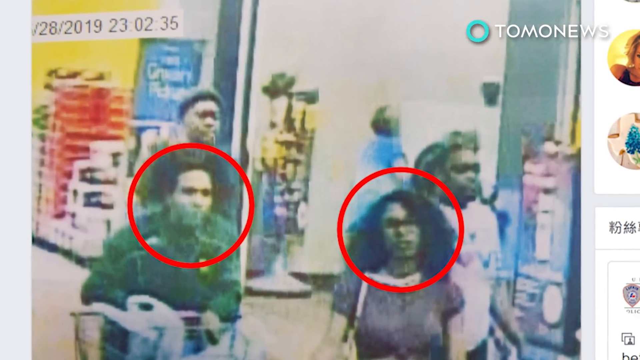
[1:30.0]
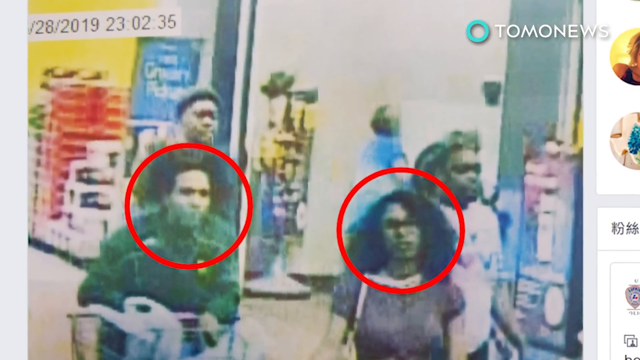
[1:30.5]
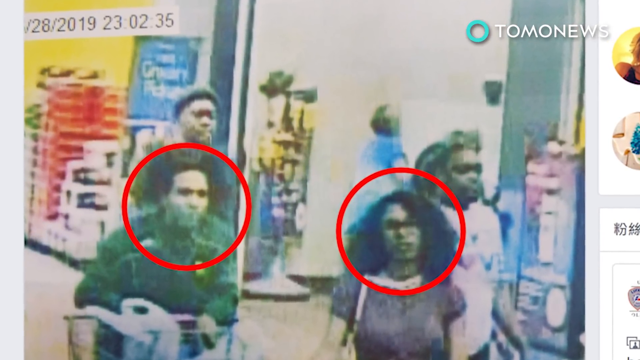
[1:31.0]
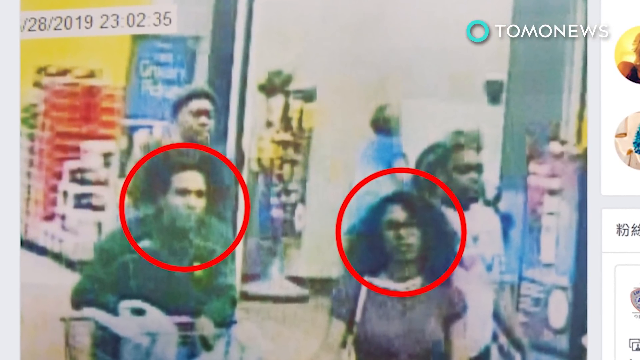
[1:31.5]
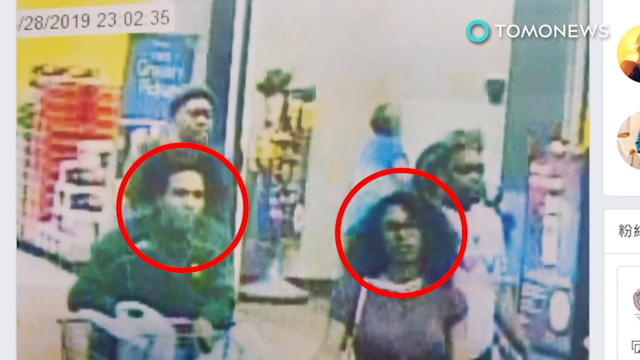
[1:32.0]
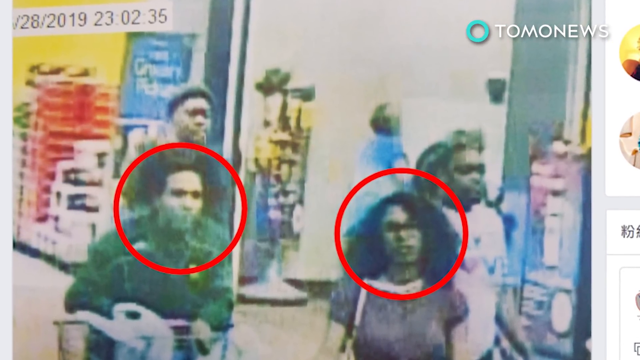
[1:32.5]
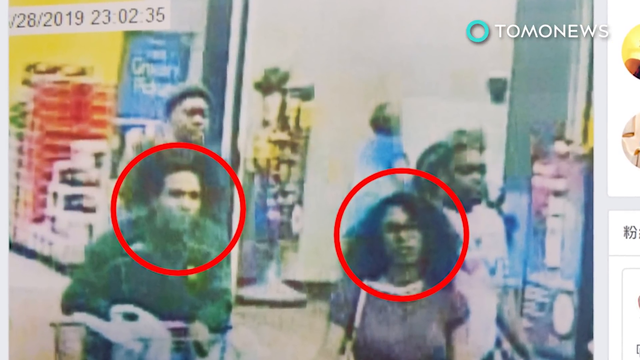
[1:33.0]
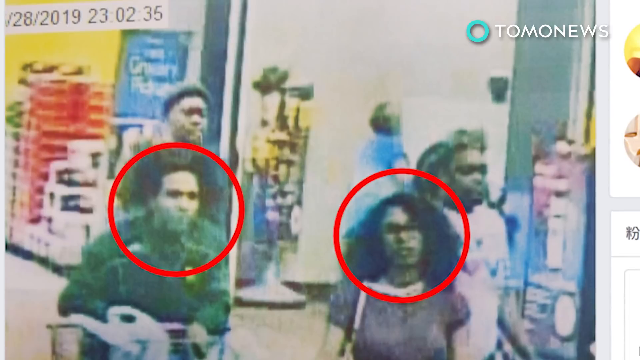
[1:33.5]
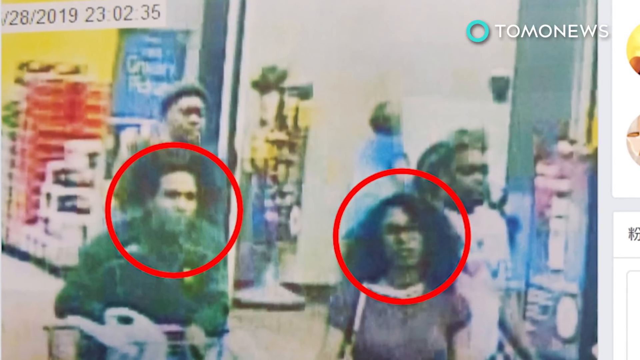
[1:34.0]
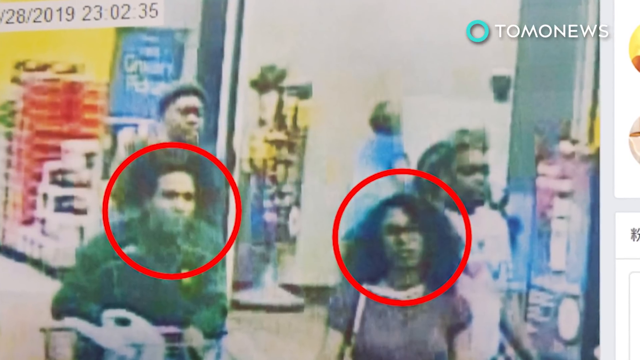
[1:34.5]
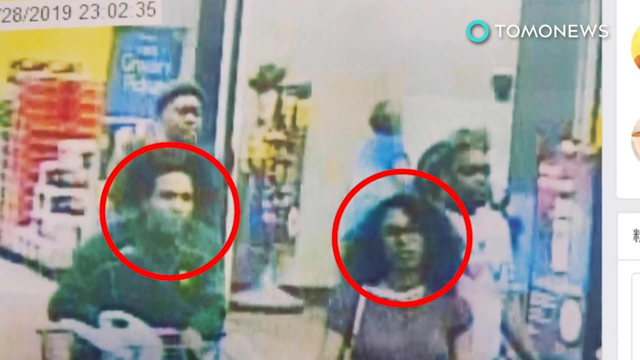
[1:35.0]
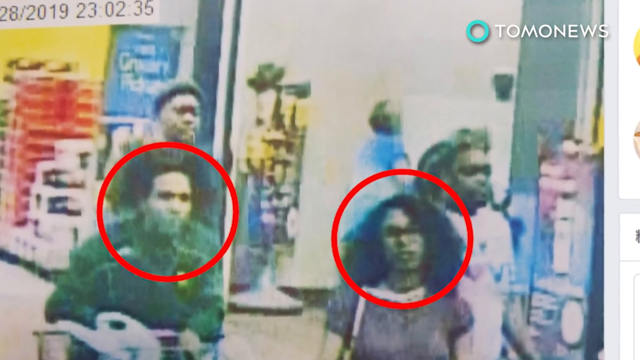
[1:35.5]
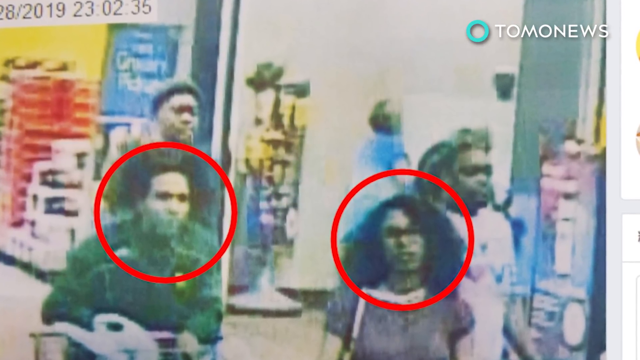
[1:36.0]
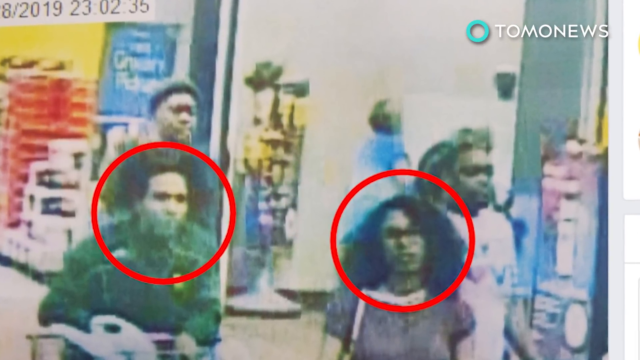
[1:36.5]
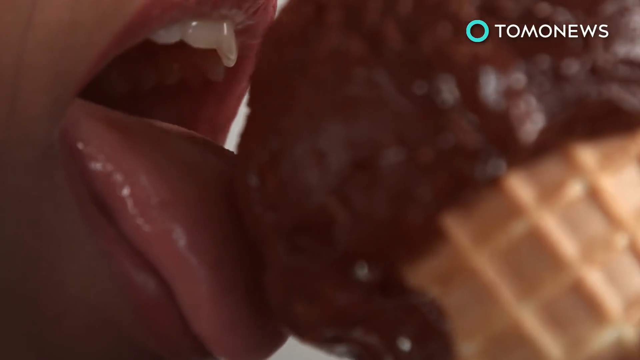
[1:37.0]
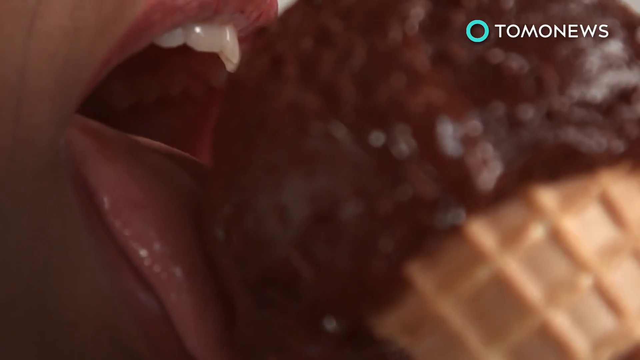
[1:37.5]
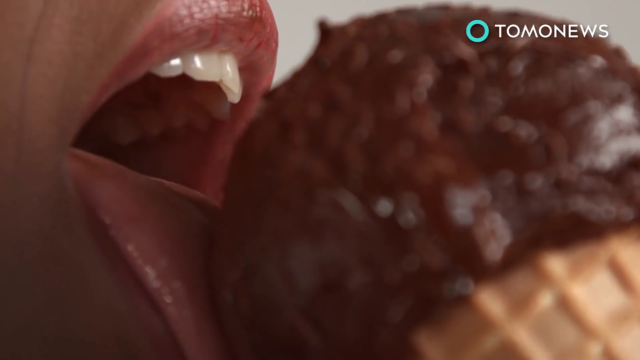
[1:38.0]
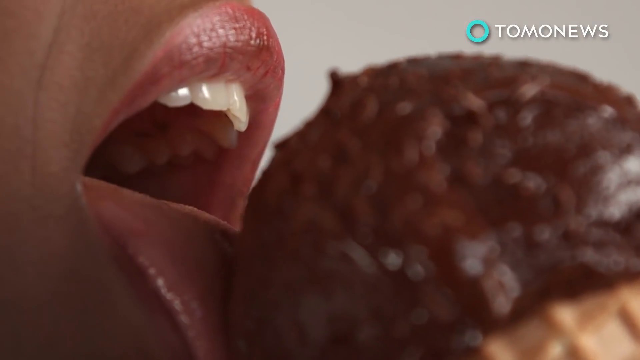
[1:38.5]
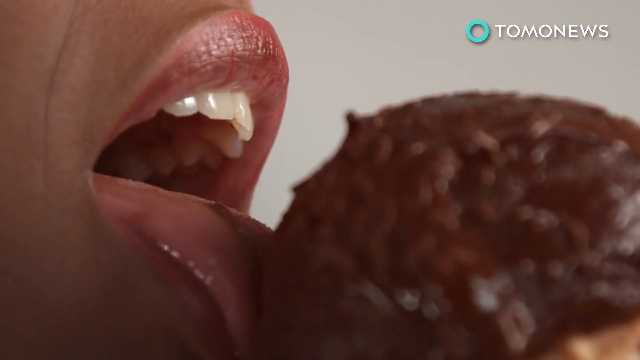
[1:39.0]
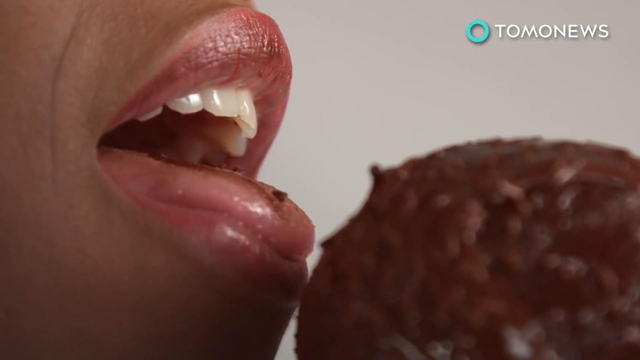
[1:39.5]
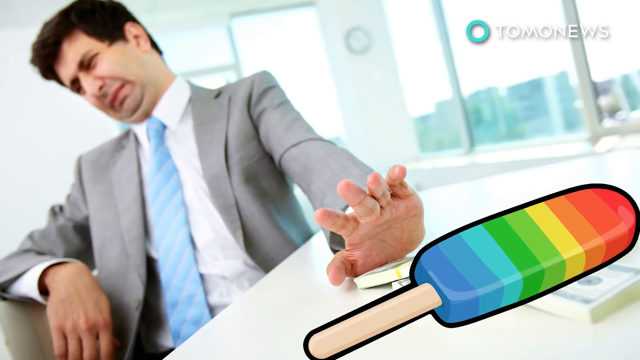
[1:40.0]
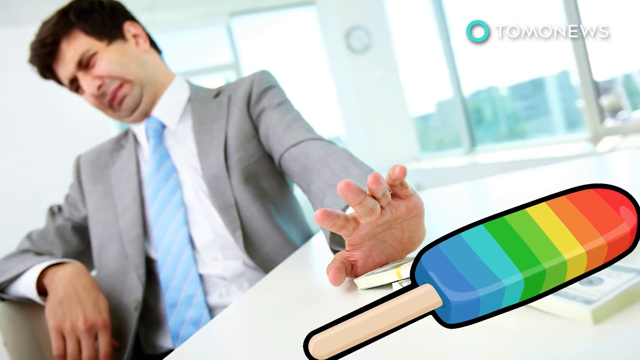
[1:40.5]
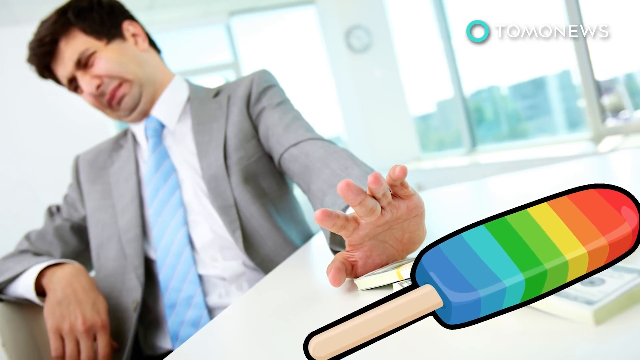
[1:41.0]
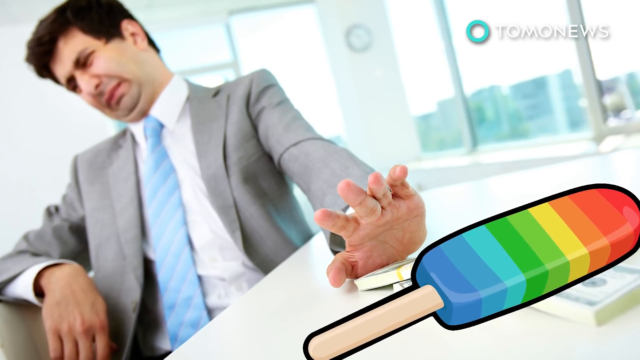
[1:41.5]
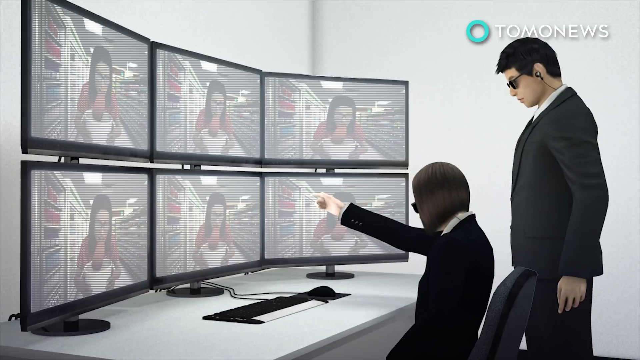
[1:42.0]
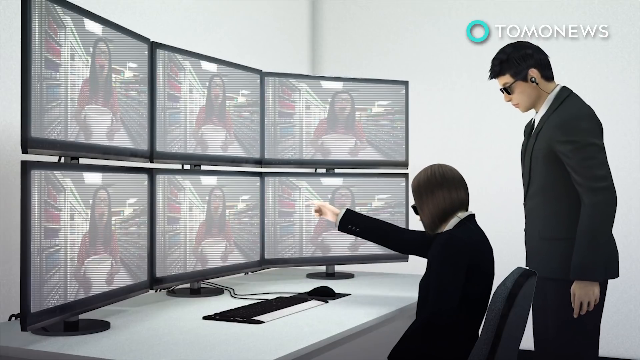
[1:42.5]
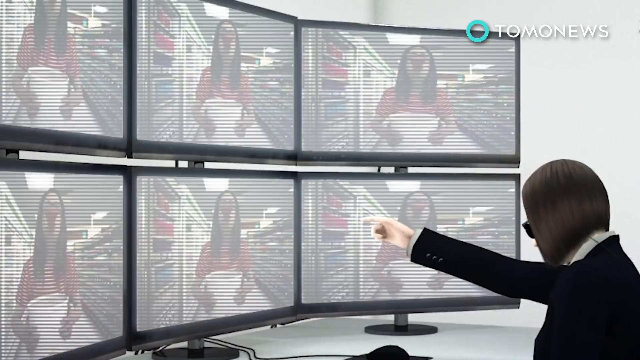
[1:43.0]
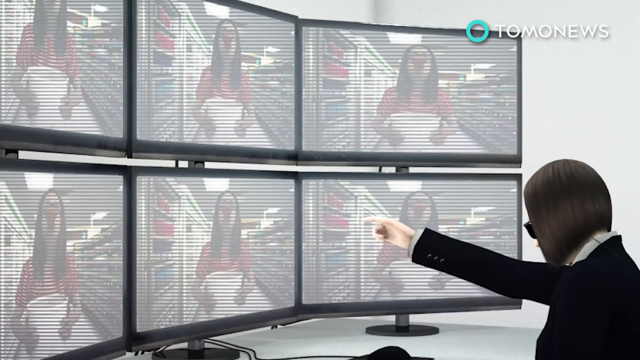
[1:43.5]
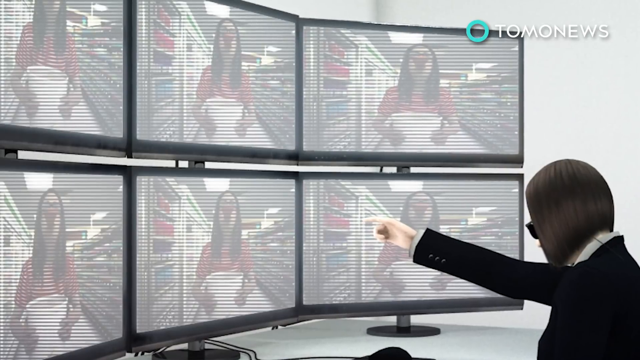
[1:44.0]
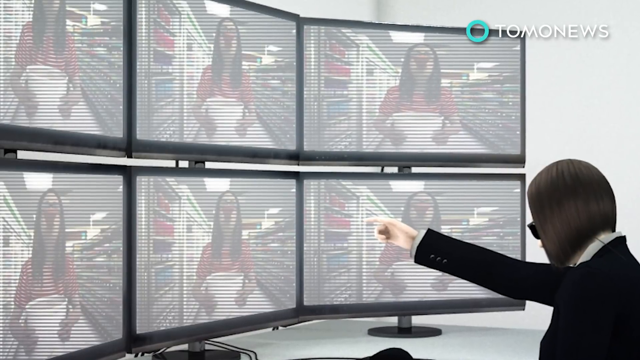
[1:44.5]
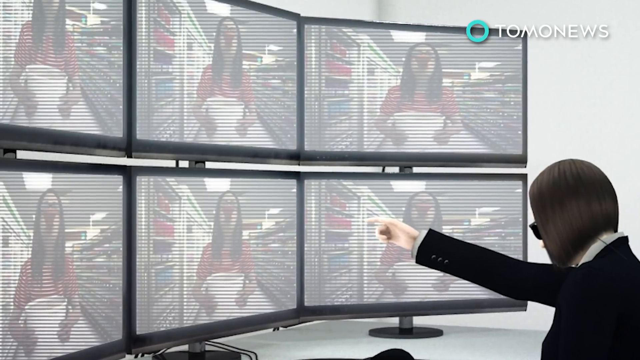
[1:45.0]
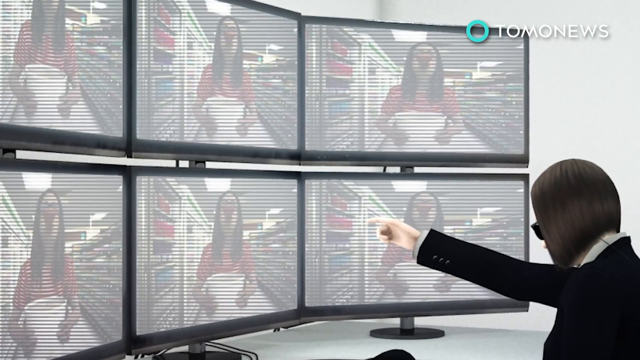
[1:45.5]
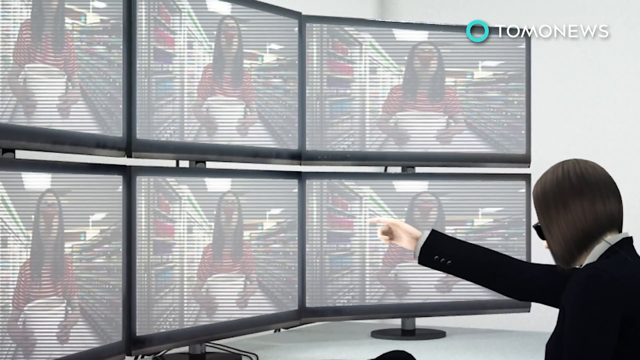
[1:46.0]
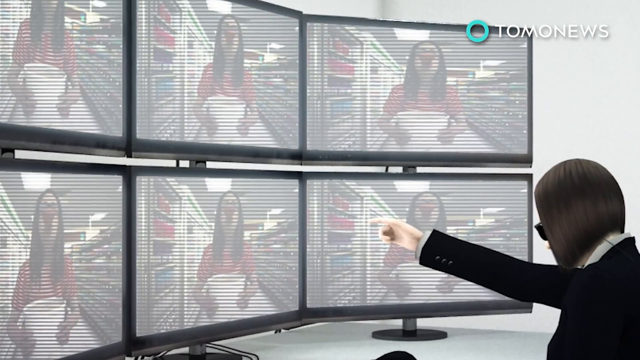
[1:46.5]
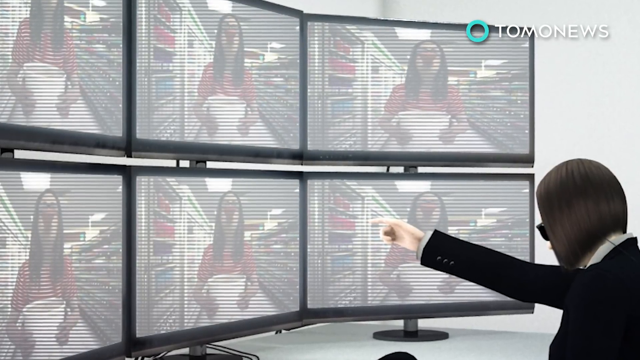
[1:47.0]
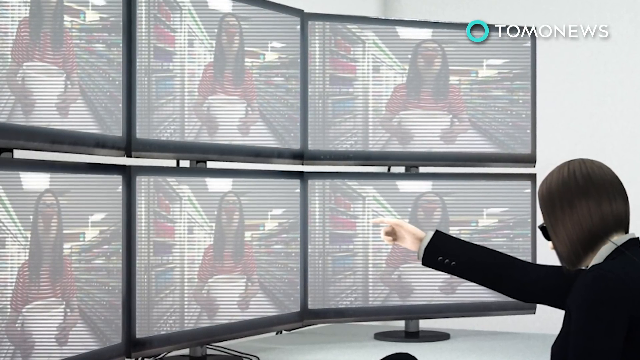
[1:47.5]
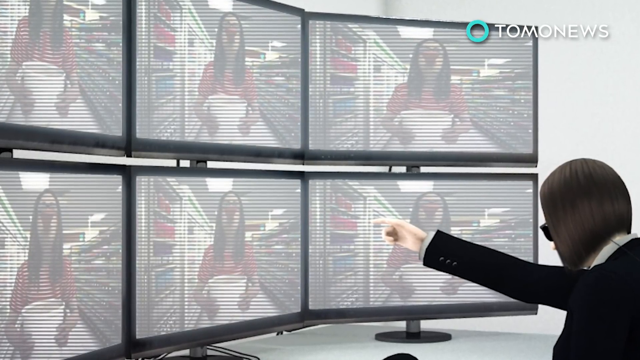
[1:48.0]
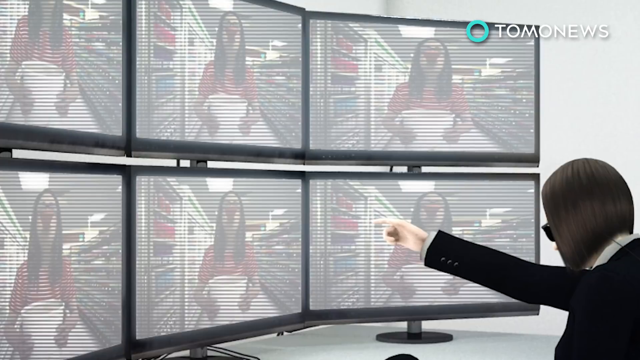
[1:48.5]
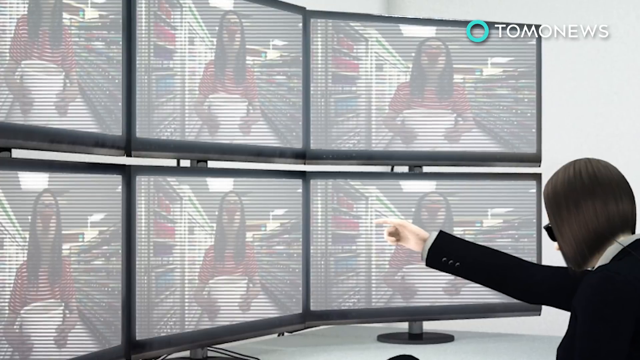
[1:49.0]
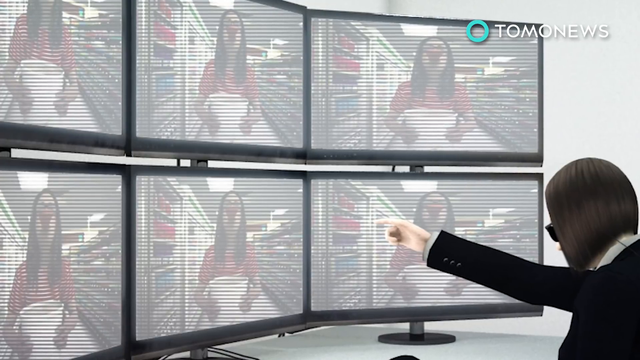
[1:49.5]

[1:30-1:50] Four people appear, two of whom can be seen clearly: a girl and a boy, each indicated with a red circle. The screen changes to show a person licking ice cream, and a professional-looking man seems to be avoiding an ice cream on top of a table, apparently disliking the idea. The screen changes again to what look like company security staff watching CCTV footage of the store, in which a lady is making ice cream on screen. They appear to be trying to find the lady.